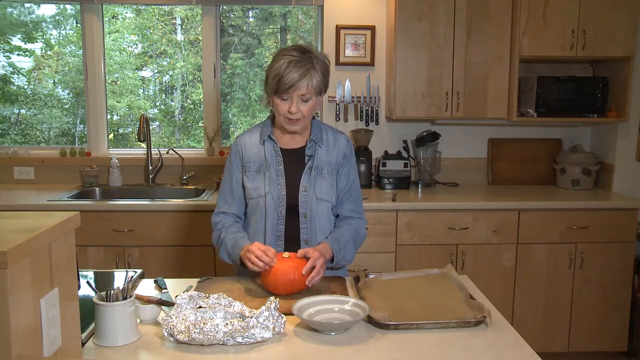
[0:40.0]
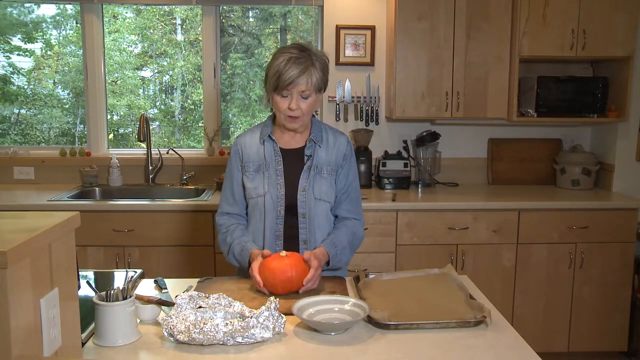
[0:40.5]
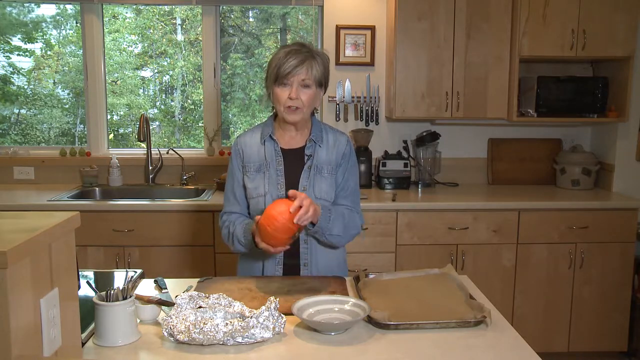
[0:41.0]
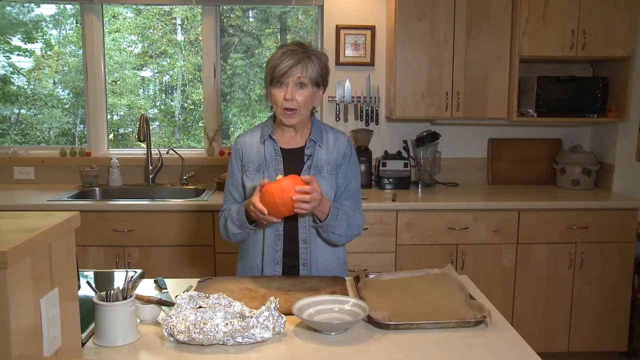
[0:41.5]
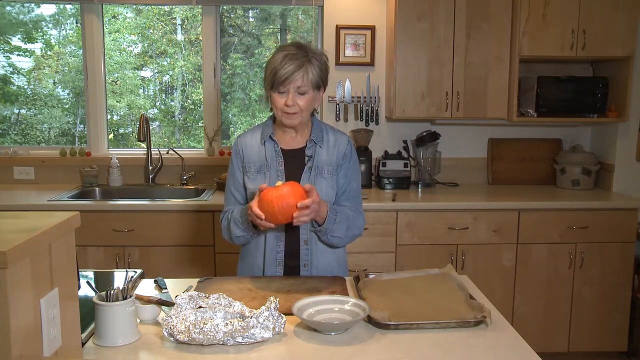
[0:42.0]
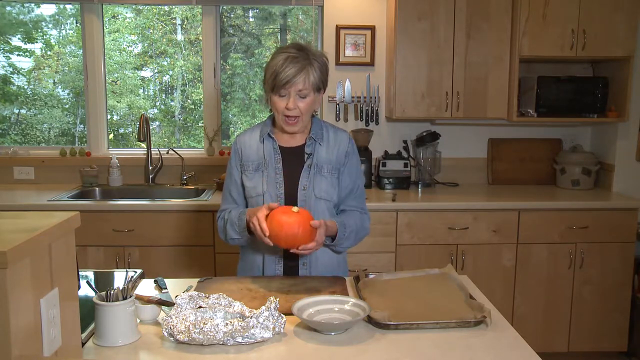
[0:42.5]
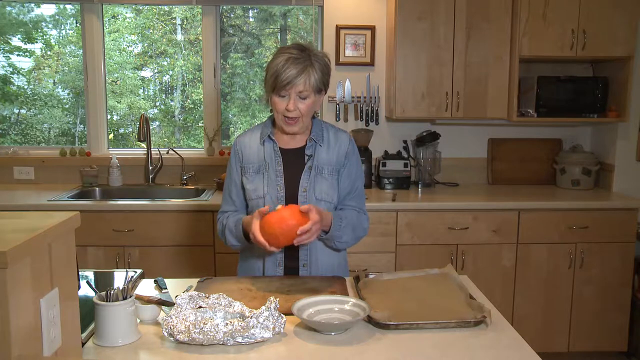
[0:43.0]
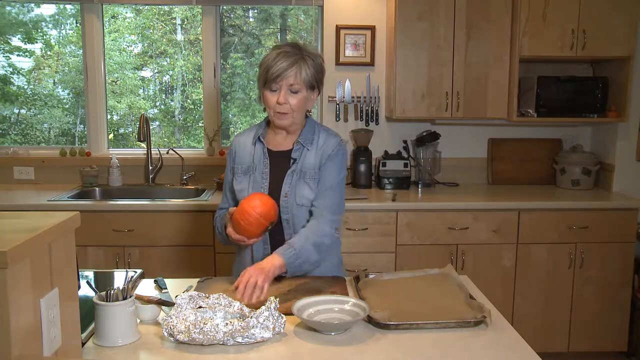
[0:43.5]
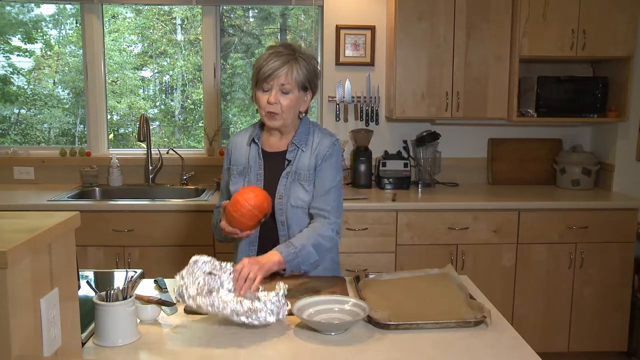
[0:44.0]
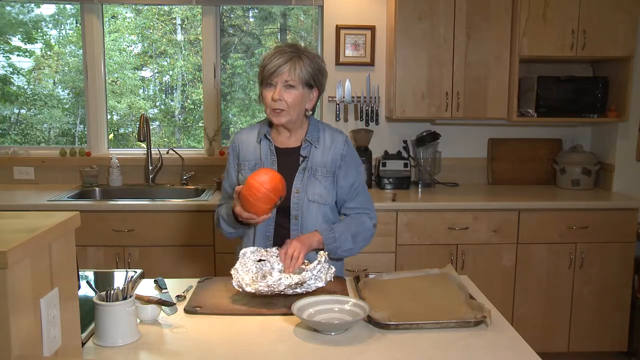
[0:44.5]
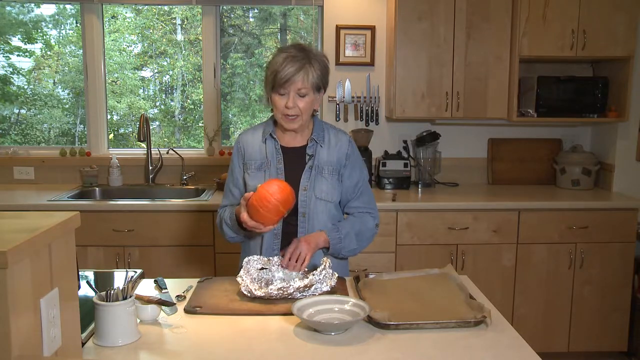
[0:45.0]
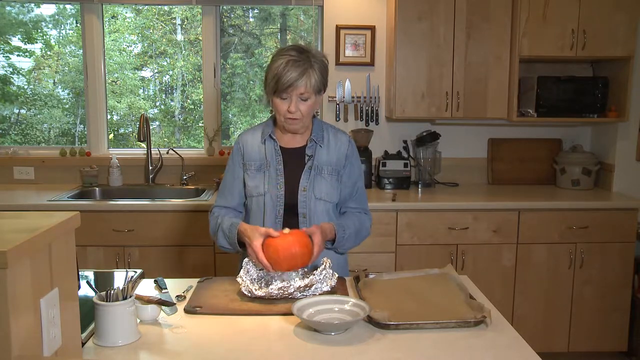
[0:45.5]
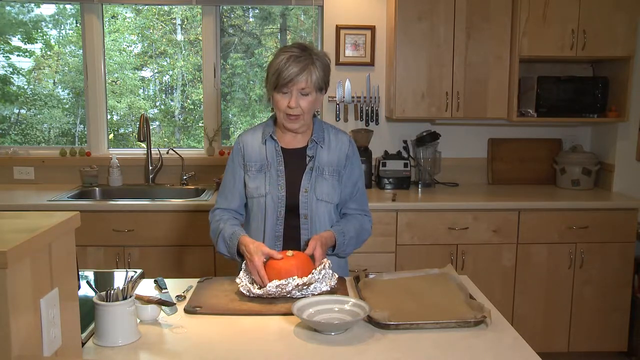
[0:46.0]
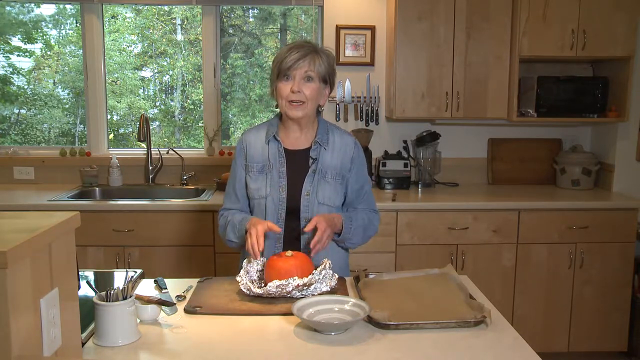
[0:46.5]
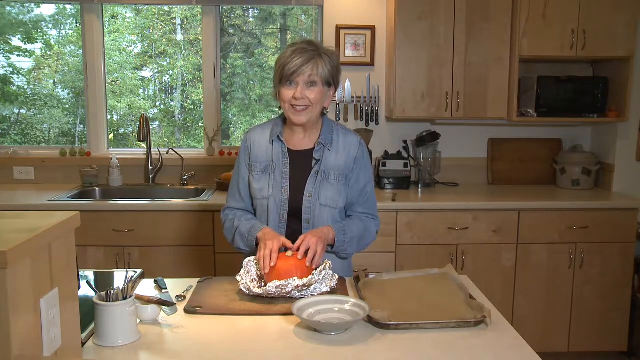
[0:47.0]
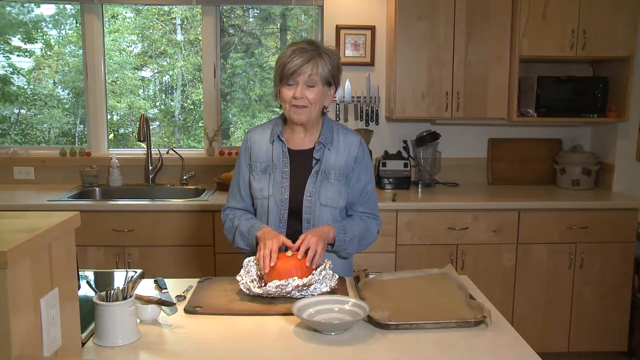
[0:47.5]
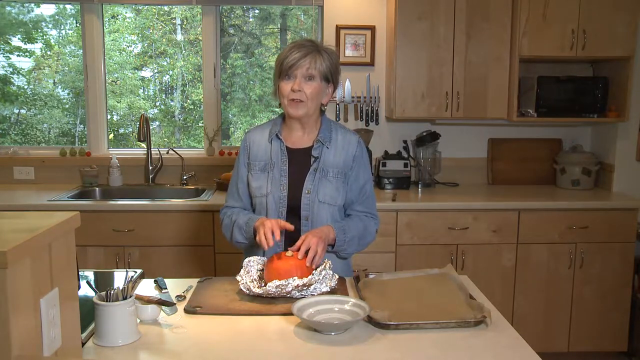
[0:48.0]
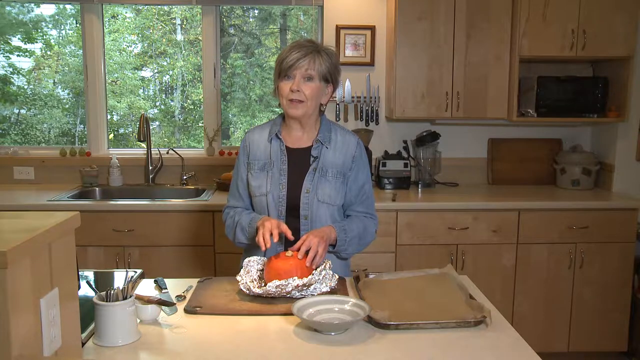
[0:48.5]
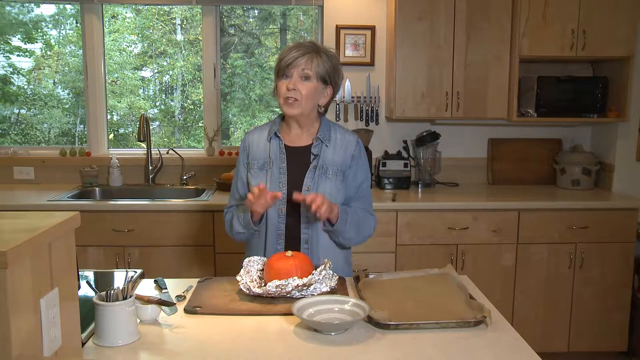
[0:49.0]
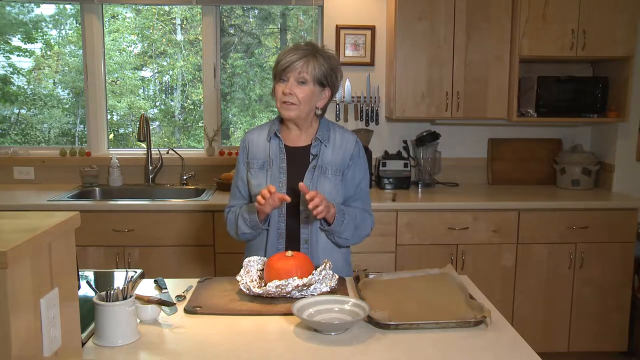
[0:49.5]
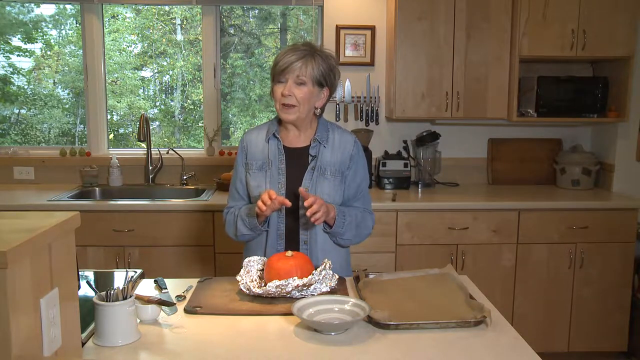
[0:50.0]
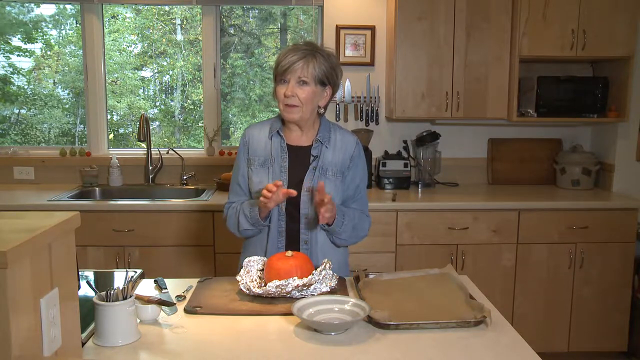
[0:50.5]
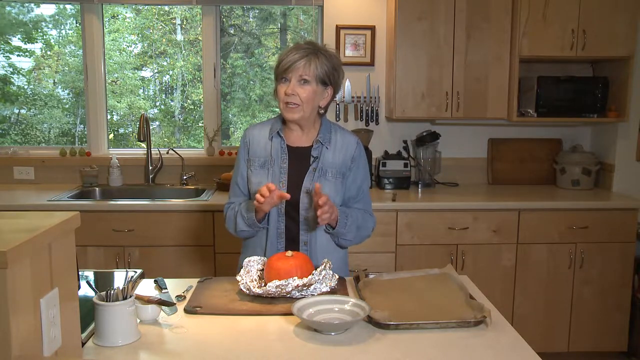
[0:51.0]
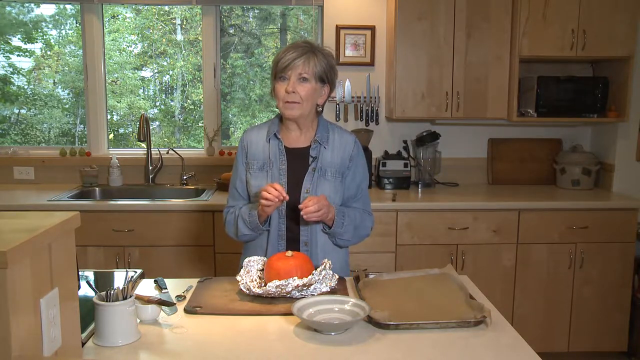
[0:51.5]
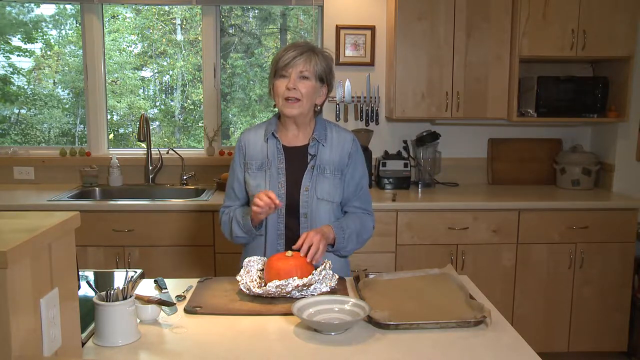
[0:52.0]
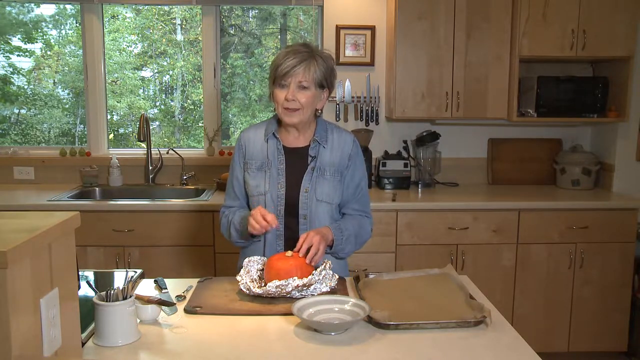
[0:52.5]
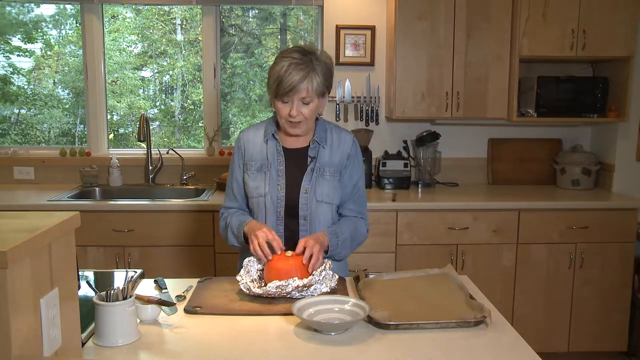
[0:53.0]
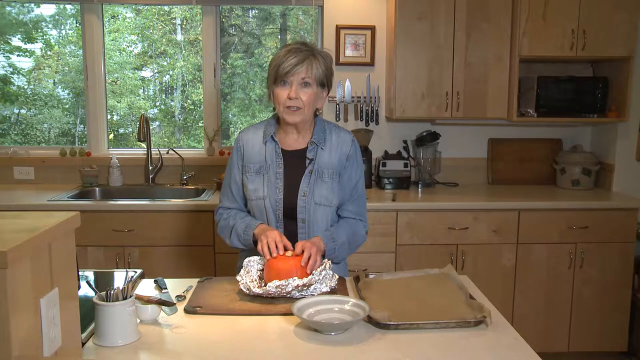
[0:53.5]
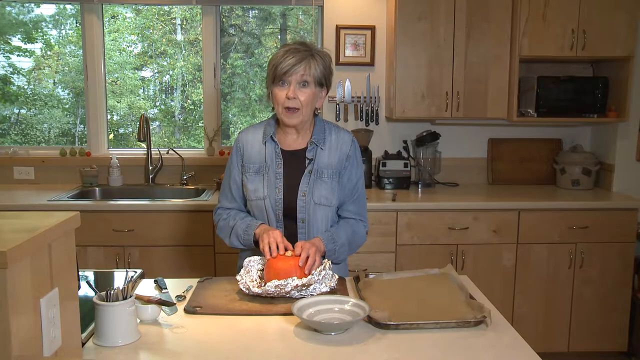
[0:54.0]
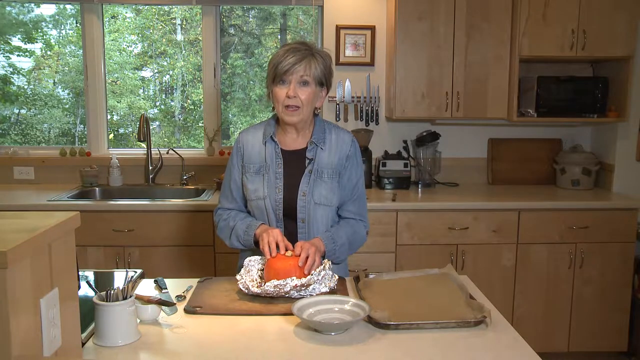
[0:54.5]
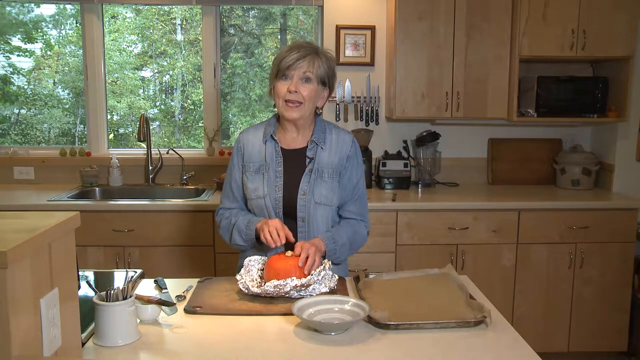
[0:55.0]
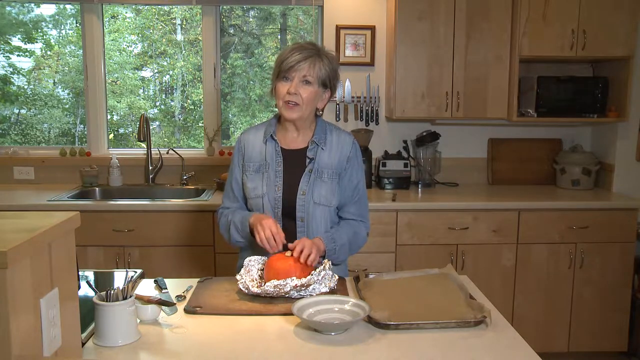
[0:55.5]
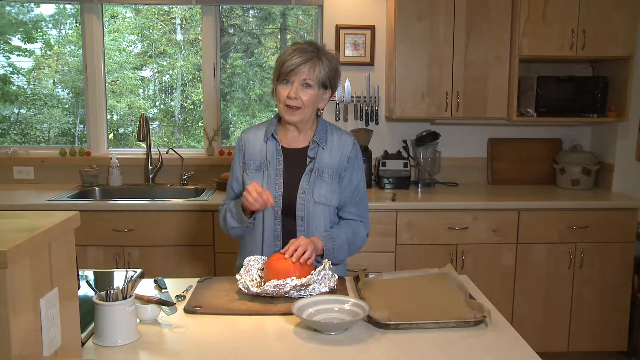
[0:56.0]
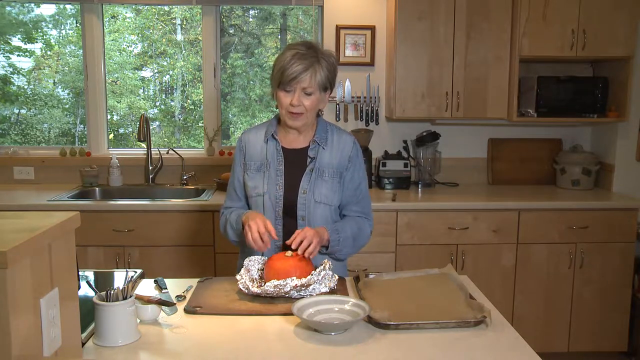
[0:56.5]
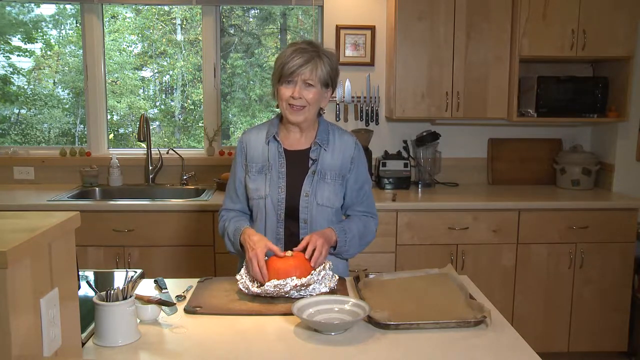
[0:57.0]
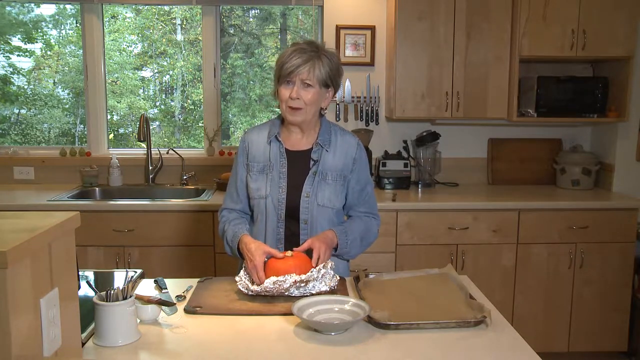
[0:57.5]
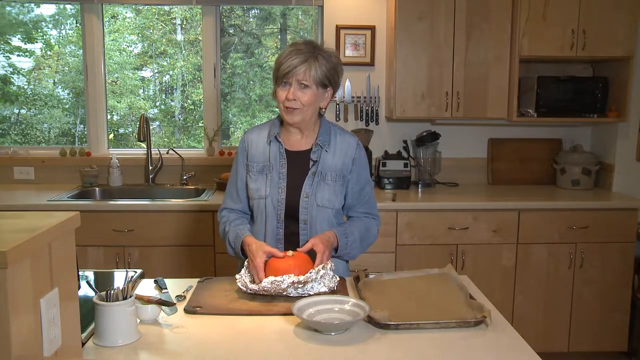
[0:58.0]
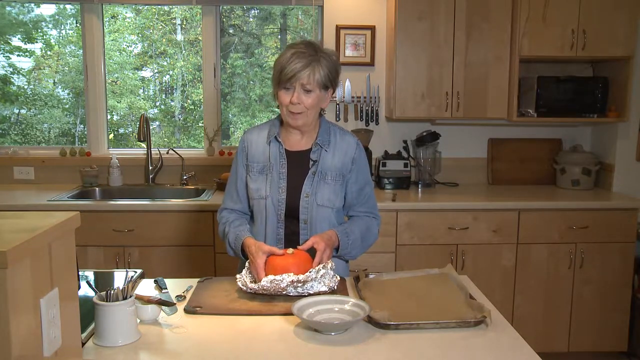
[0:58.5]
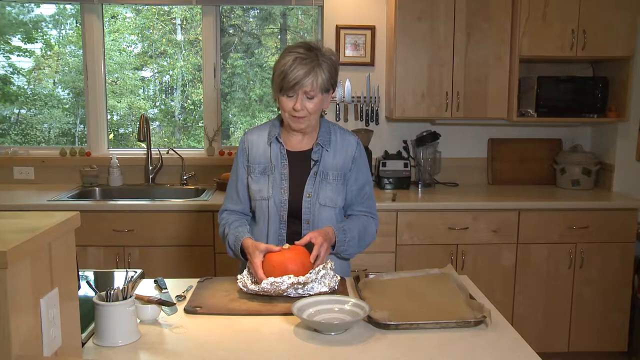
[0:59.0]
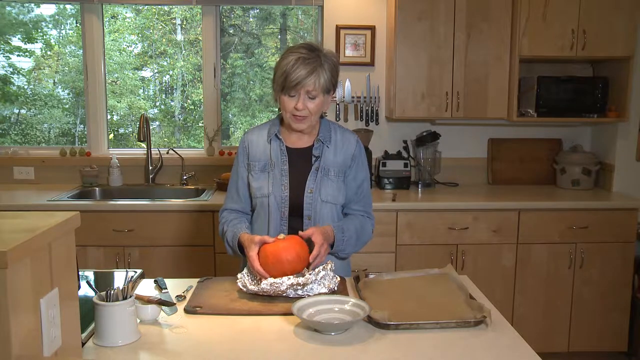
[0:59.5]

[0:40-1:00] The woman holds the pumpkin and moves it around with her hands, then turns her attention to the foil and grabs it a bit. She is talking and looking at the screen or at the camera person, gesturing as she illustrates something. She holds her hands right over the pumpkin, then puts her hands back on it and taps it a little. When she moves, the pumpkin casts a shadow underneath it on the cutting board, her moving arms cast a shadow behind it, and a shadow moves by the sink cabinets. She puts the foil back on top of the cutting board and seems to want to put the pumpkin on it again, possibly to illustrate that it needs to be baked.